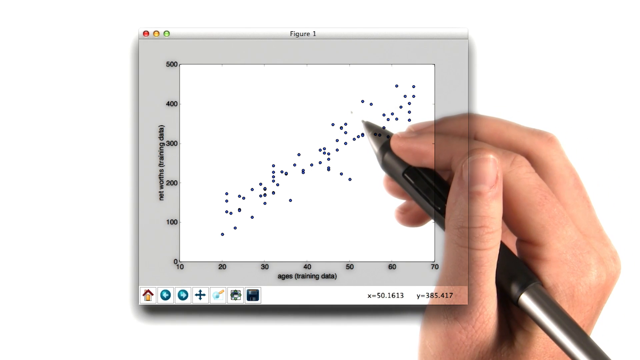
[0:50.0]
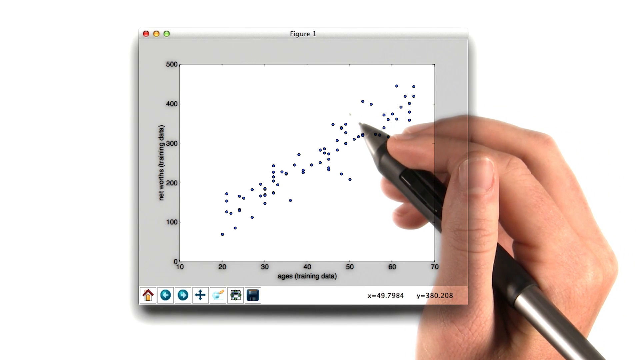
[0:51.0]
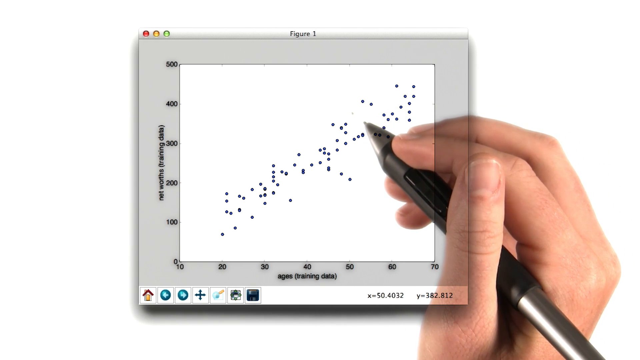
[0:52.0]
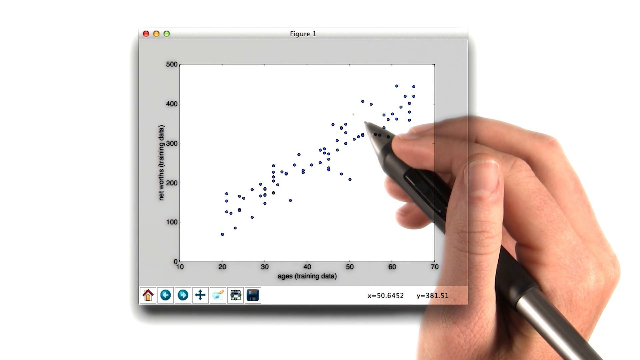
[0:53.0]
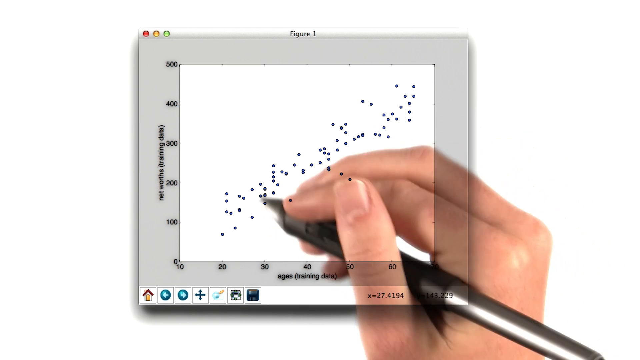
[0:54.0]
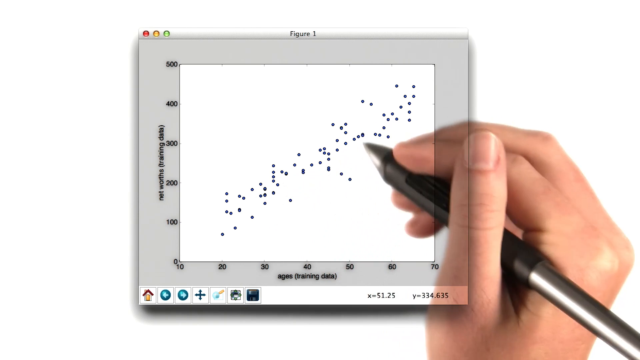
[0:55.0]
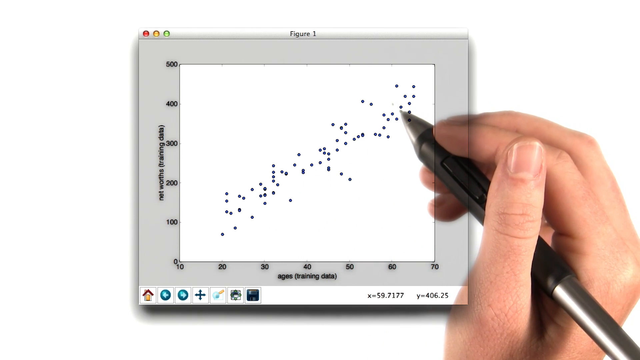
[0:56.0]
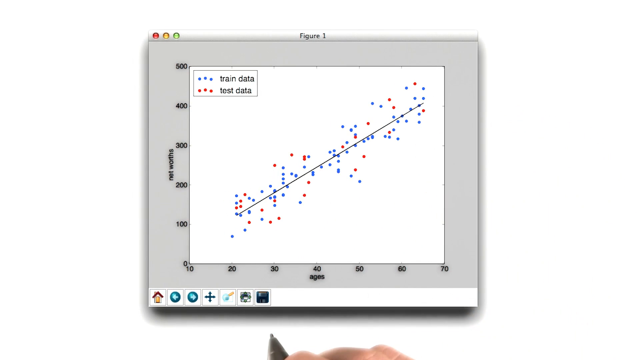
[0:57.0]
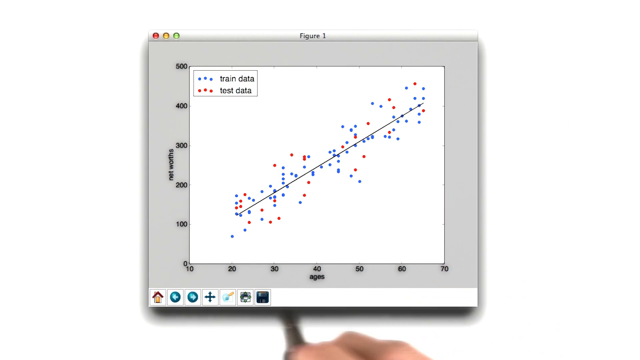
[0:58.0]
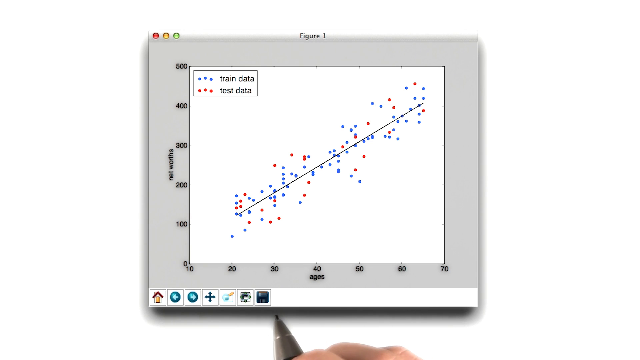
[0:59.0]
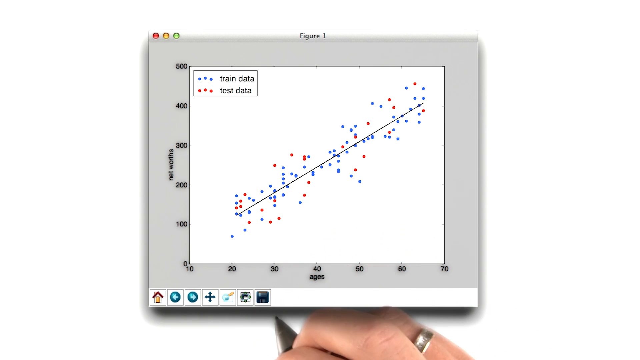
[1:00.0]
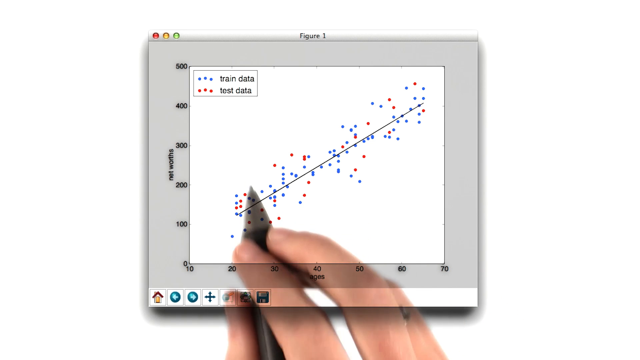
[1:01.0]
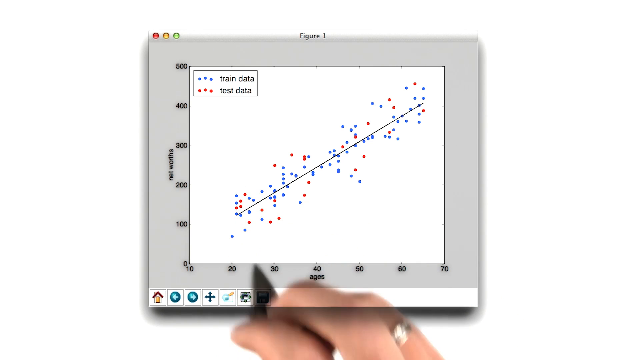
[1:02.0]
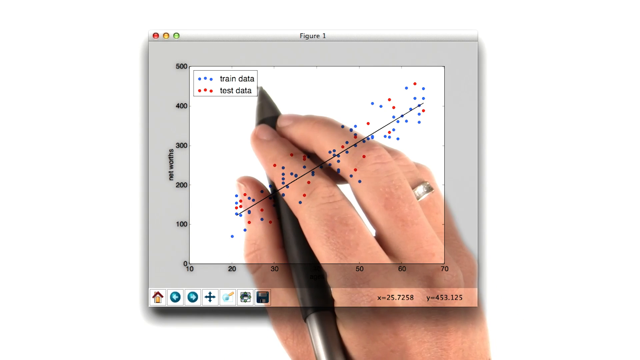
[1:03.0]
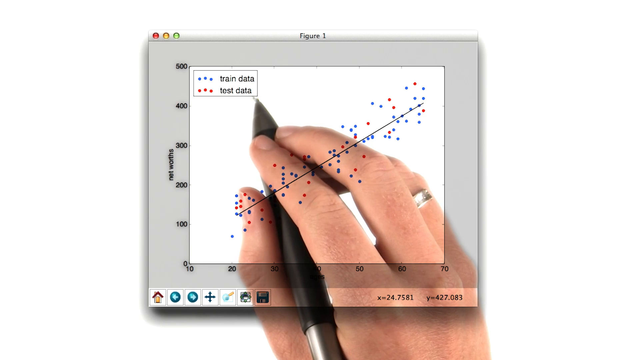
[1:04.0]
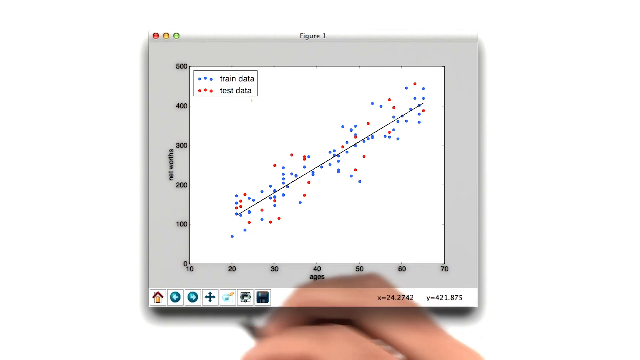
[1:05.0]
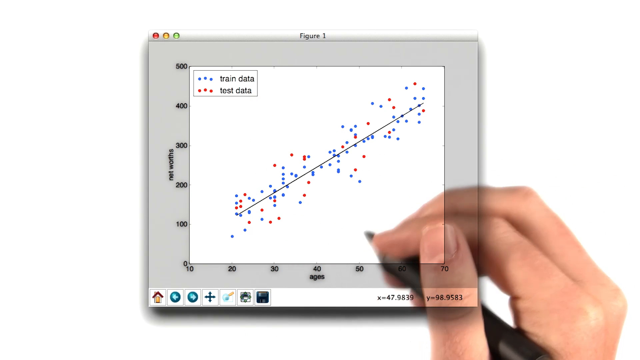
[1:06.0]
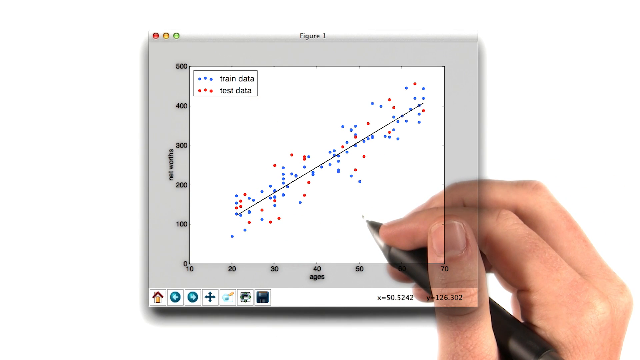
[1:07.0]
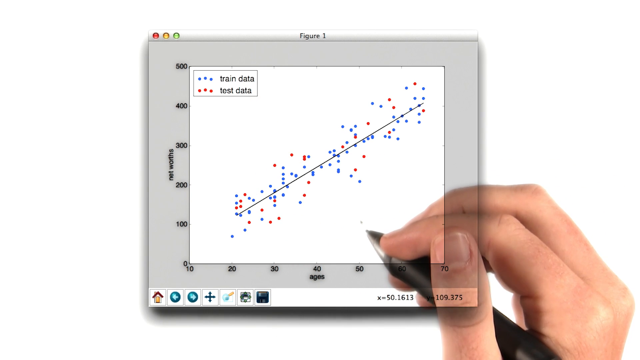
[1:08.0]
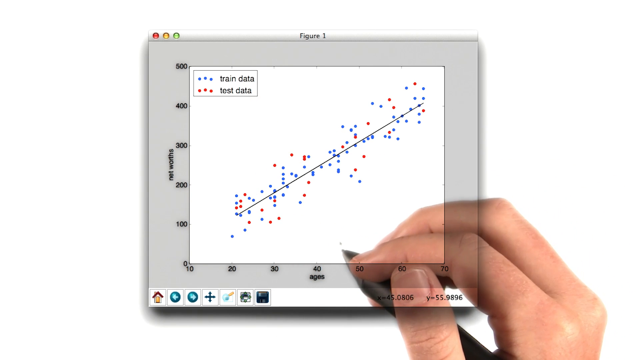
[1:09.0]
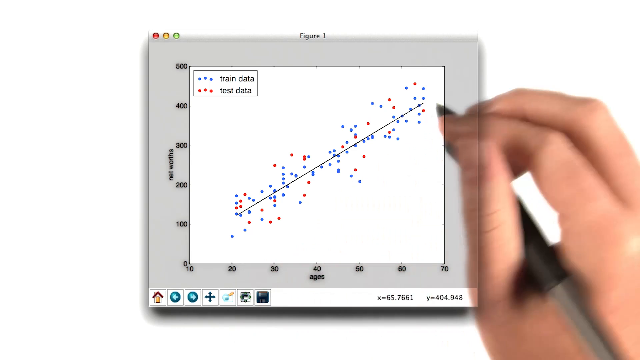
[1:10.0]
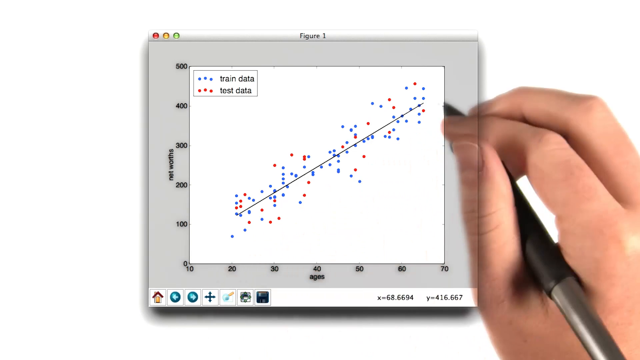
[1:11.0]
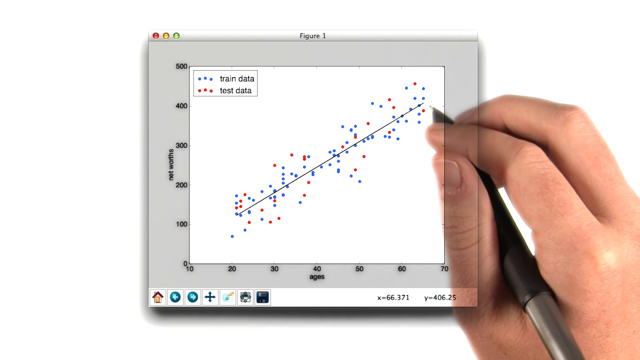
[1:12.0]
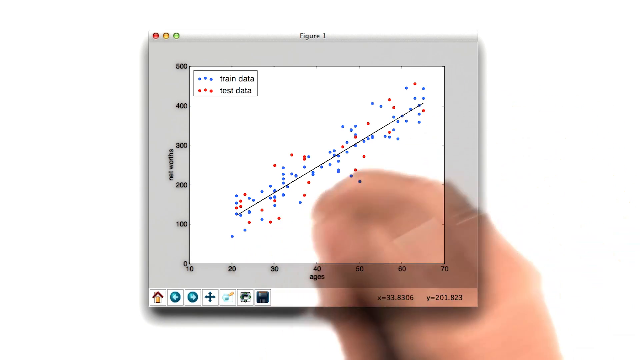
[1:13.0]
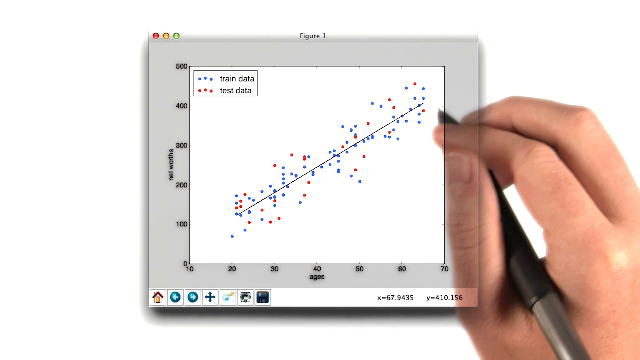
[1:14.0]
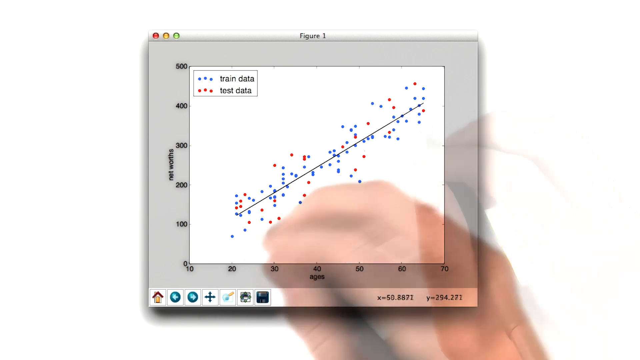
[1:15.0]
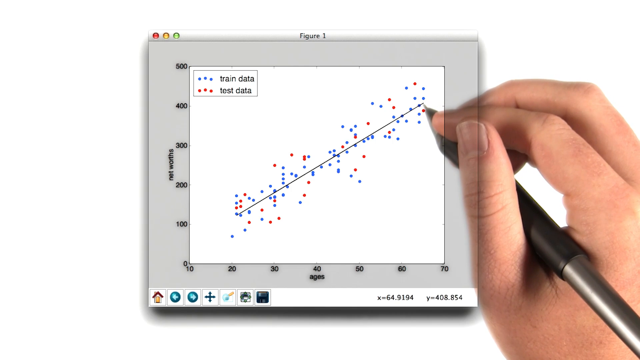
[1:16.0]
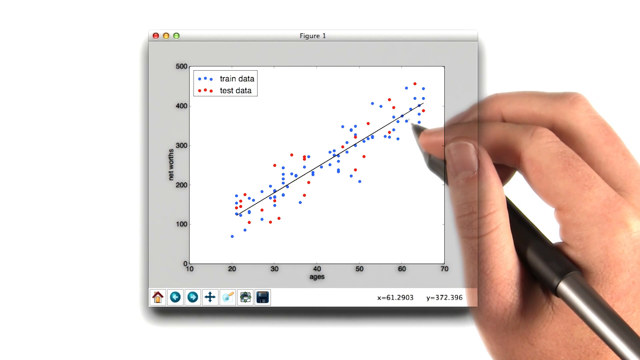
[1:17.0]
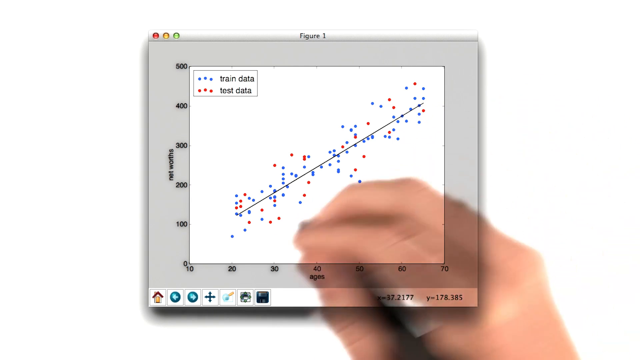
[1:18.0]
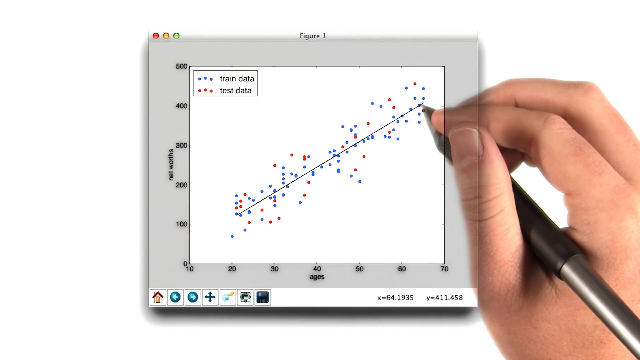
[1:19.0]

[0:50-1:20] The person points to an empty space at the top right of the scatterplot. The graph then transitions to dots sorted by colour into red and blue, with blue dots representing train data and red dots representing loss data. There are far fewer red dots than blue dots.